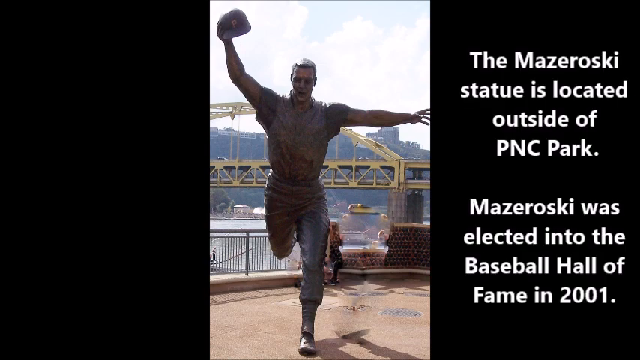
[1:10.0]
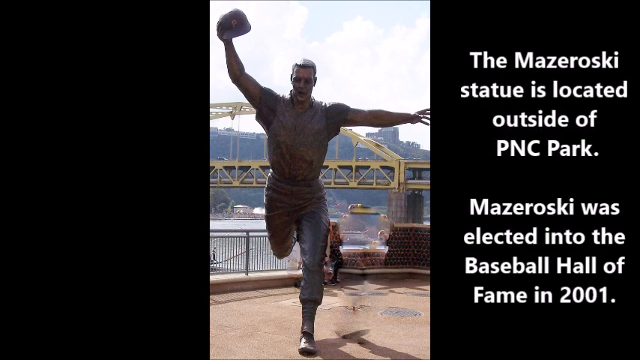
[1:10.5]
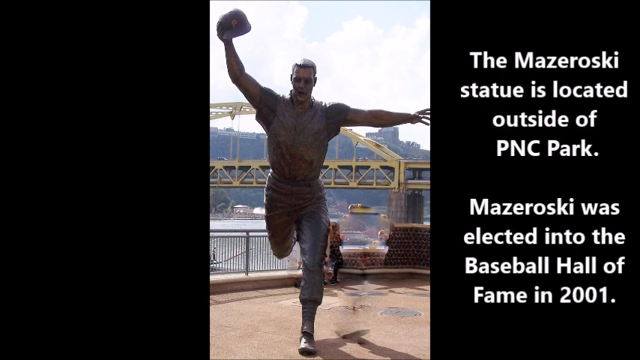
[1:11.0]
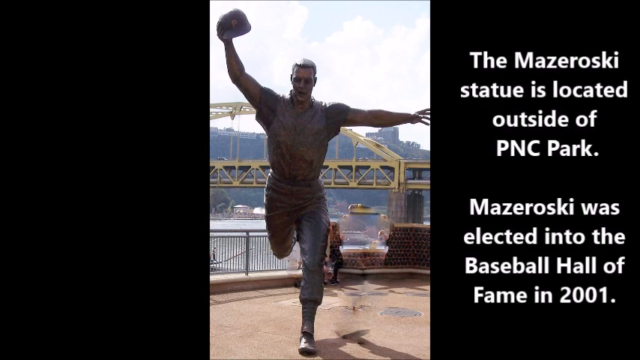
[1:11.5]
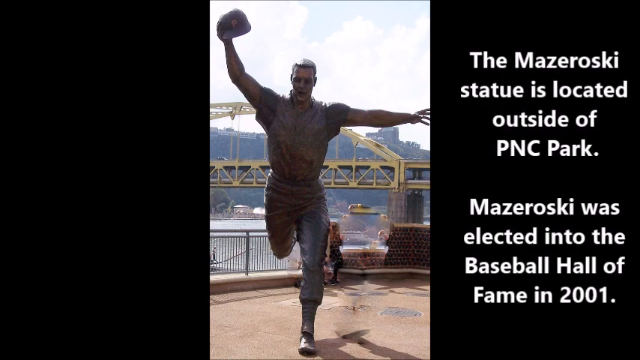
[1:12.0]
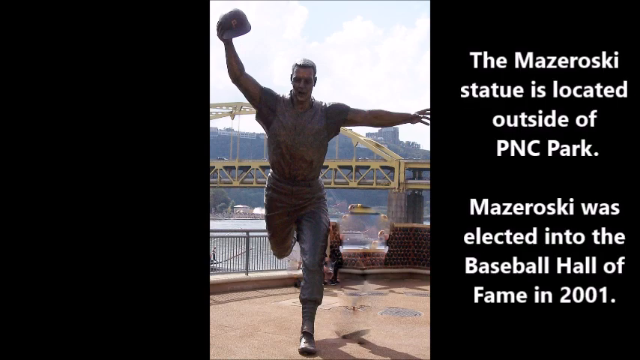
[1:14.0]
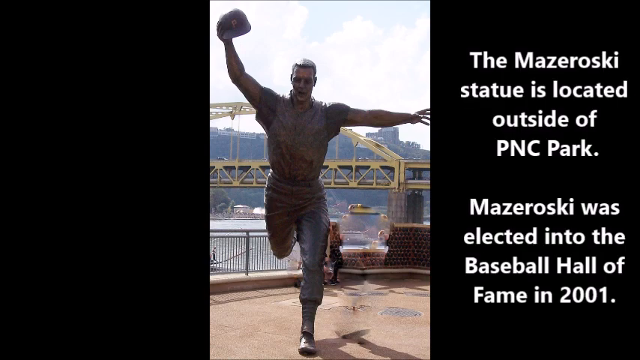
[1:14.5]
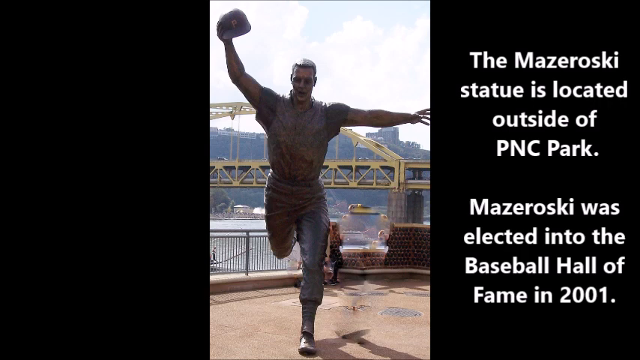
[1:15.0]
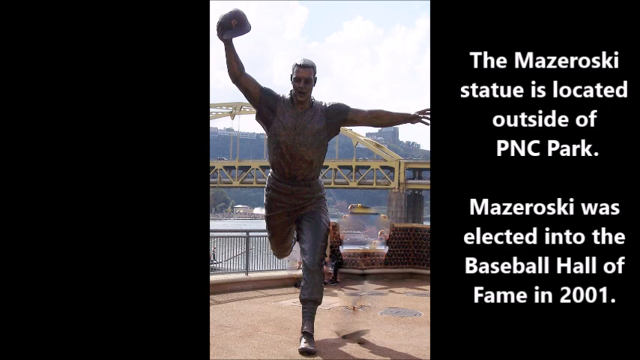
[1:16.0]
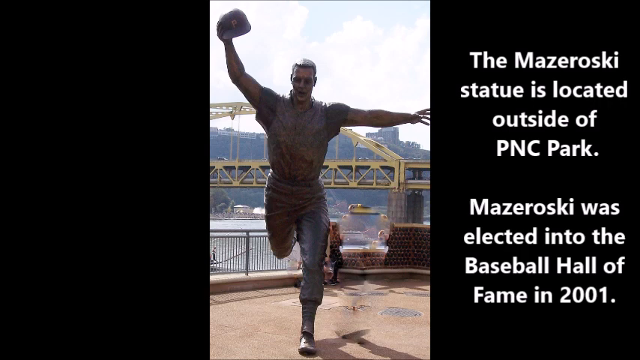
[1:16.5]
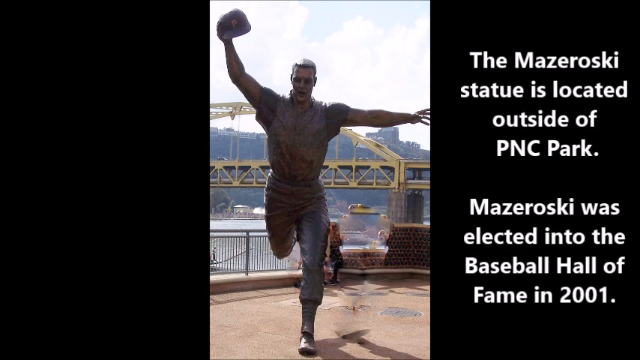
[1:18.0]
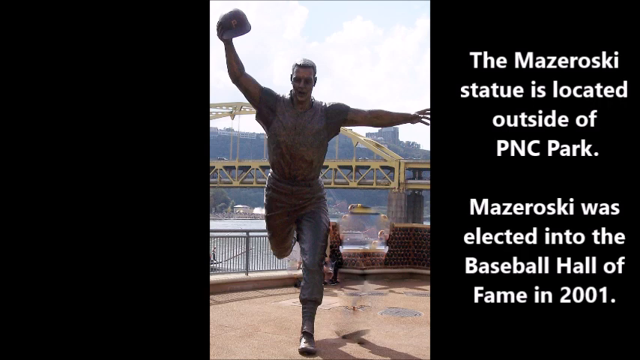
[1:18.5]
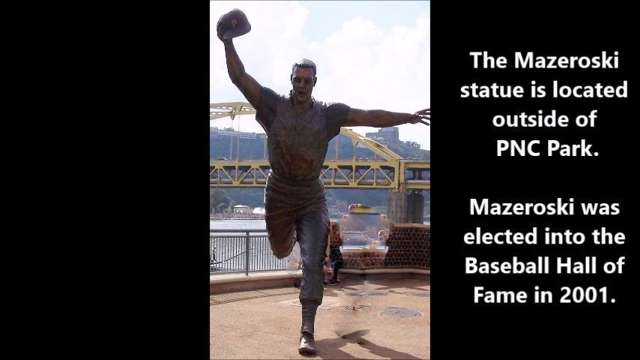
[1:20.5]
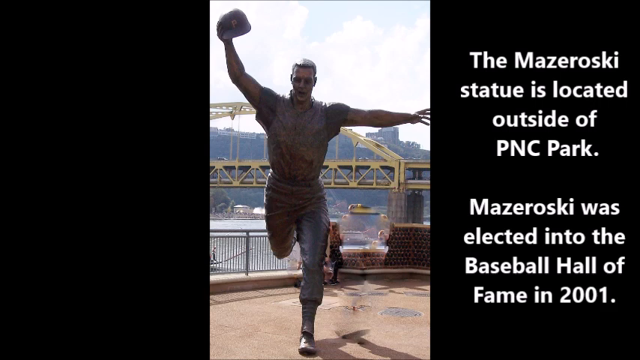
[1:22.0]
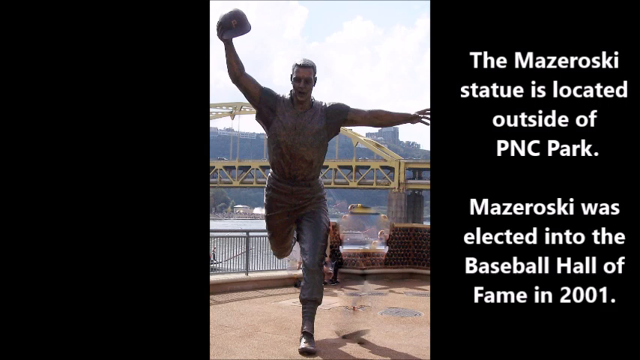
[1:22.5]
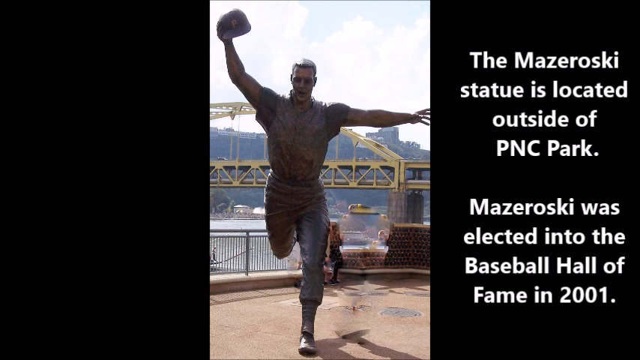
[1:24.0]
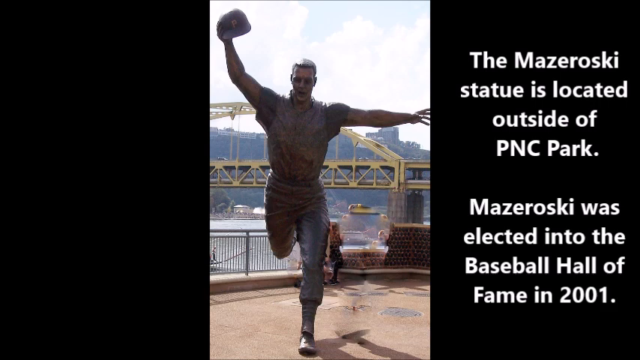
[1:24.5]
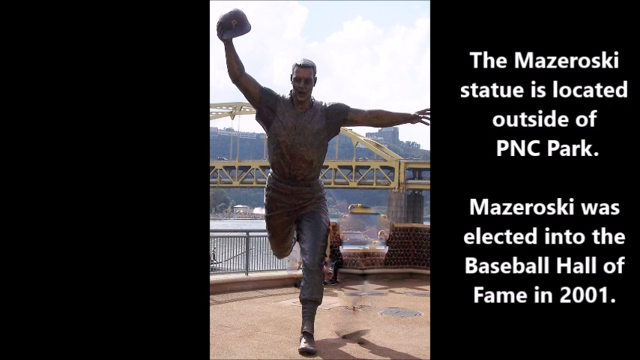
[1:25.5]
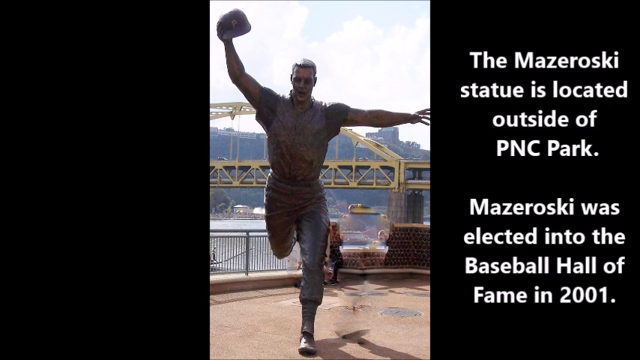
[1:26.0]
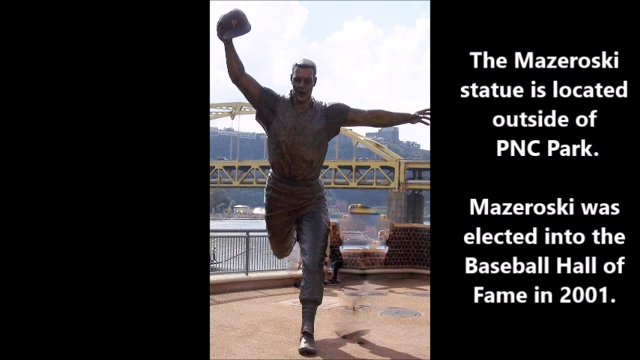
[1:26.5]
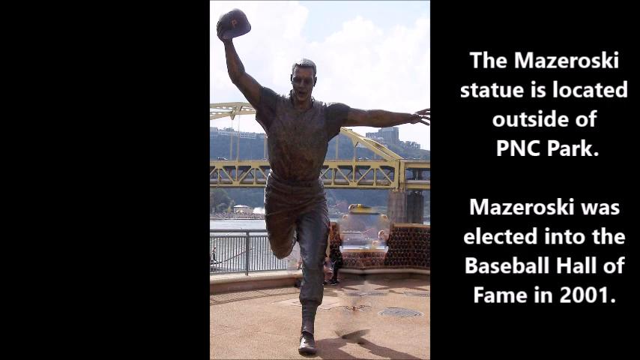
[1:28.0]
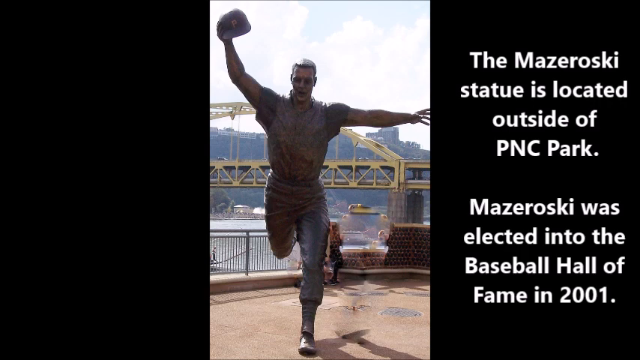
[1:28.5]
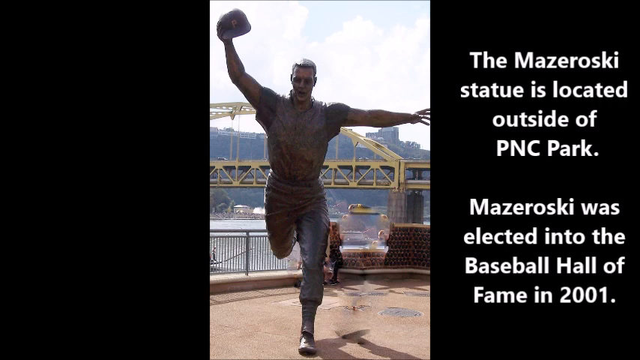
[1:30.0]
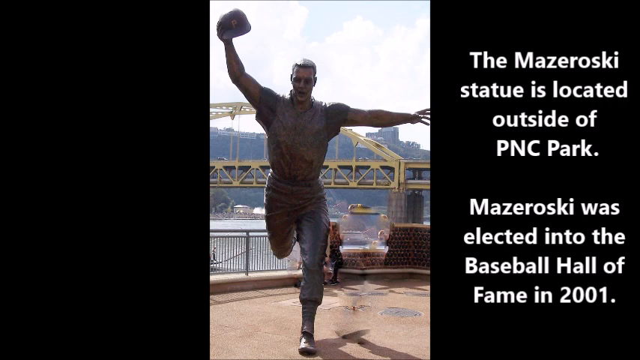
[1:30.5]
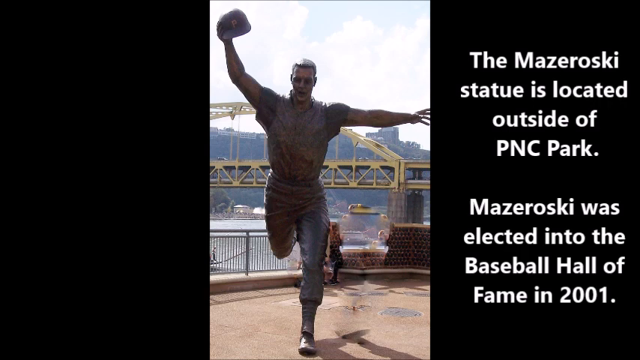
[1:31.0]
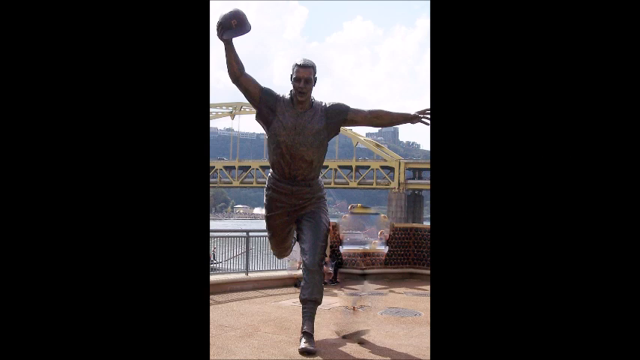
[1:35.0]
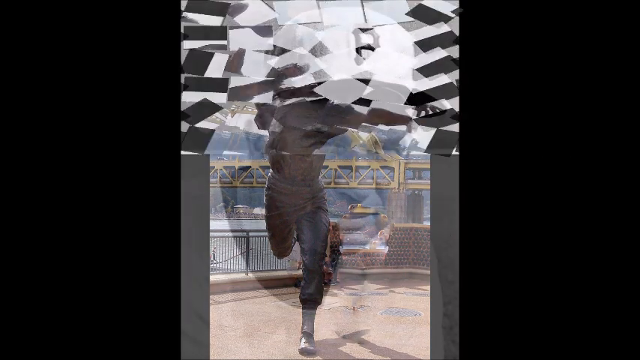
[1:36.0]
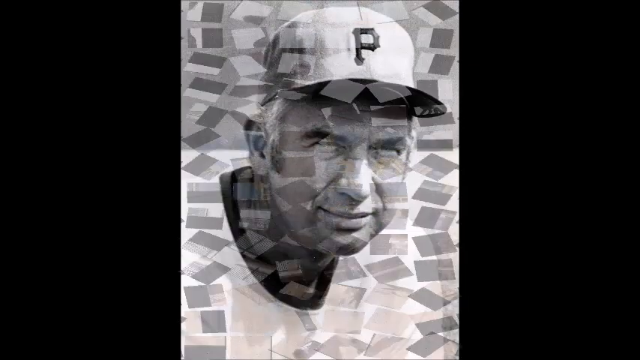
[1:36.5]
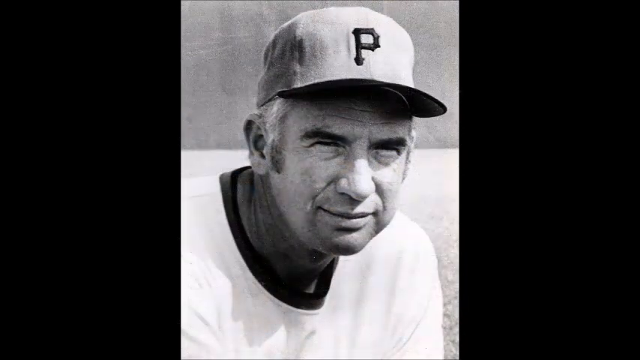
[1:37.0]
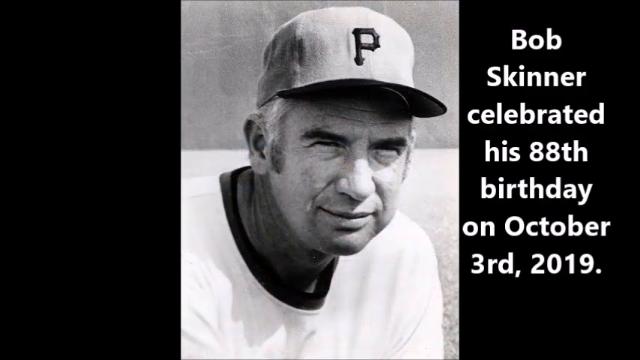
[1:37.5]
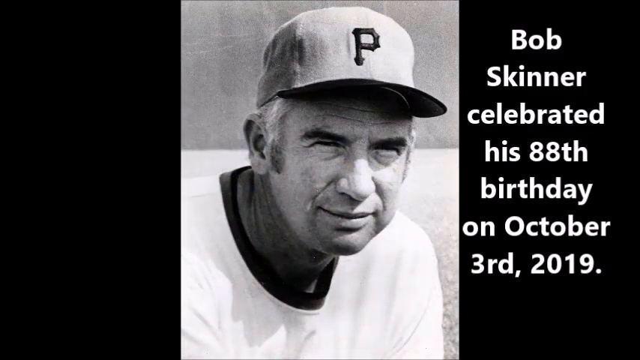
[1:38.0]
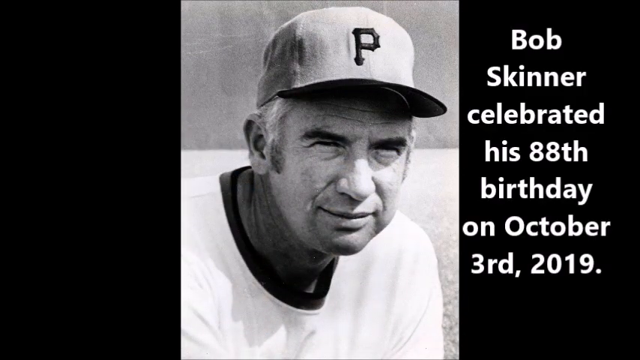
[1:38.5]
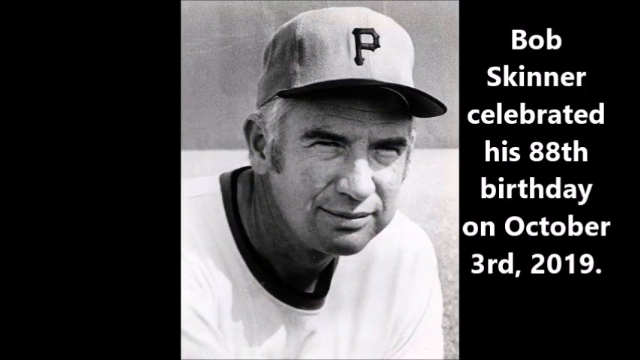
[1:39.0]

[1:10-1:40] The colour photograph of the bronze statue of the baseball player remains vertically in the centre of the screen. On the black section to the right, white writing appears: 'The Mazeroski statue is located outside of PNC Park'. Another paragraph of white text below reads 'Mazeroski was elected into the Baseball Hall of Fame in 2001'. The image stays for some time before the white text disappears and another digital effect leads to the next image: the central image breaks up into dozens of small swirling rectangles that fade away to reveal a black and white photograph of a baseball player looking off to the right of the shot. He is an older man with grey hair, wearing a light-coloured baseball cap with a black P on the front and a white shirt with black trim around the collar. White text to the right of him on the black section reads 'Bob Skinner celebrated his 88th birthday on October 3rd, 2019'.